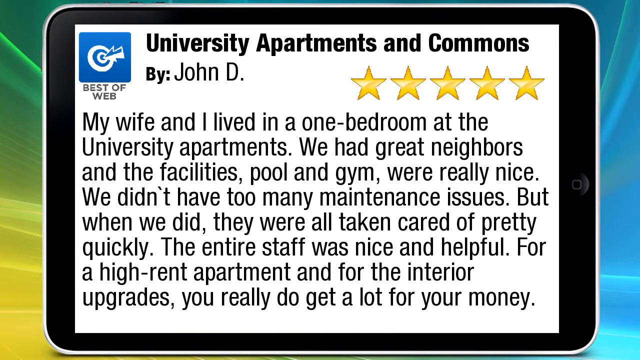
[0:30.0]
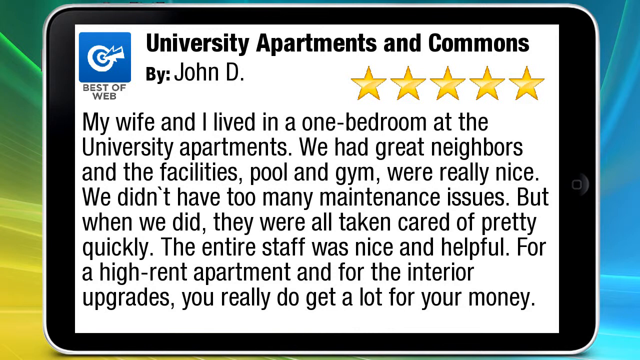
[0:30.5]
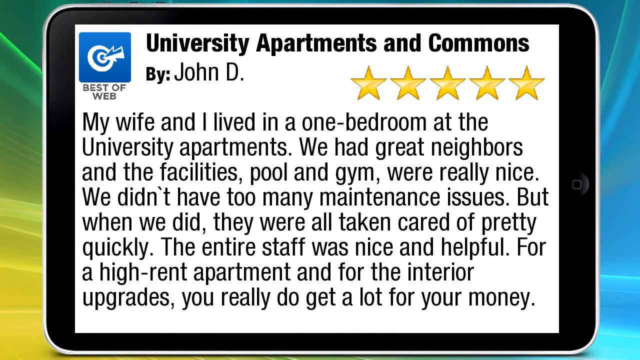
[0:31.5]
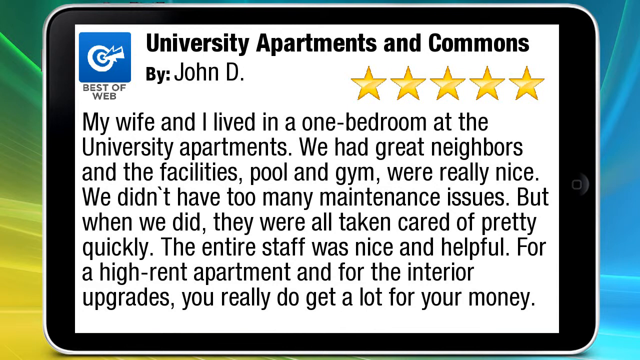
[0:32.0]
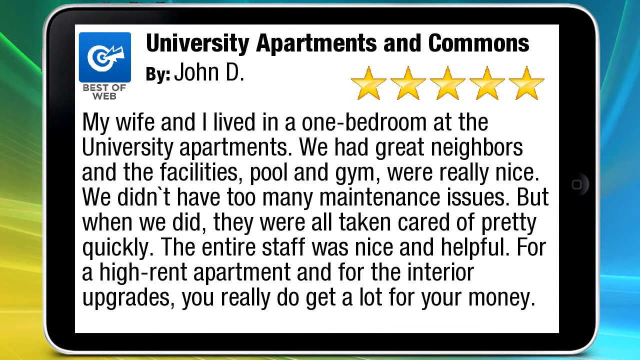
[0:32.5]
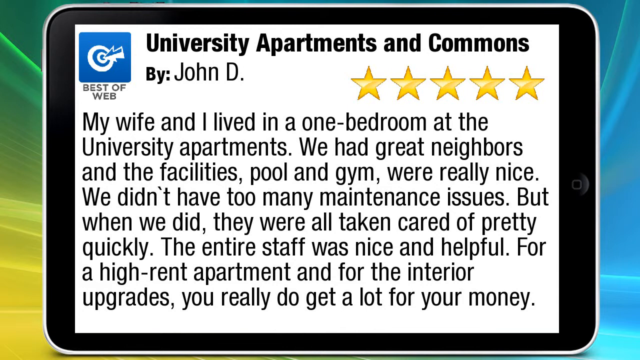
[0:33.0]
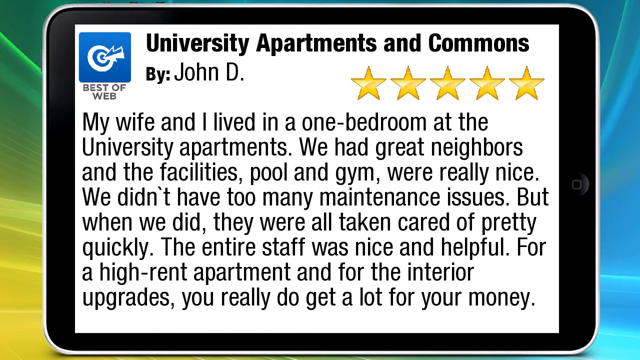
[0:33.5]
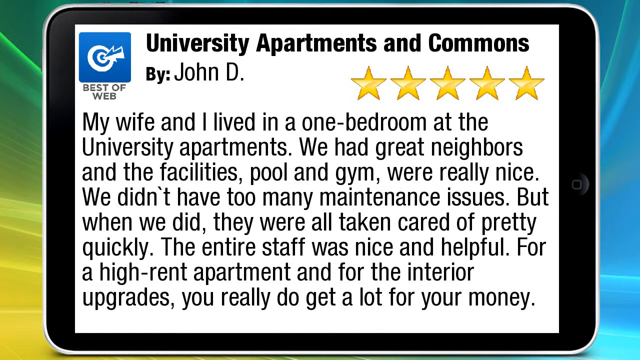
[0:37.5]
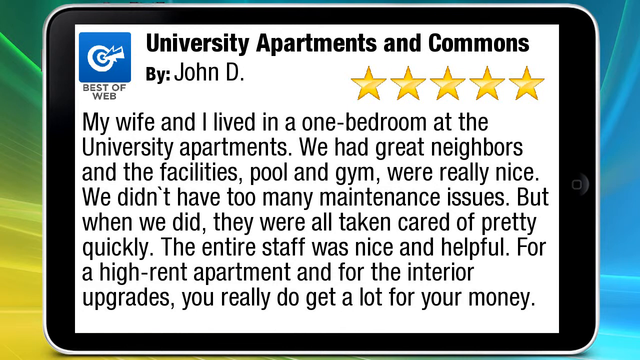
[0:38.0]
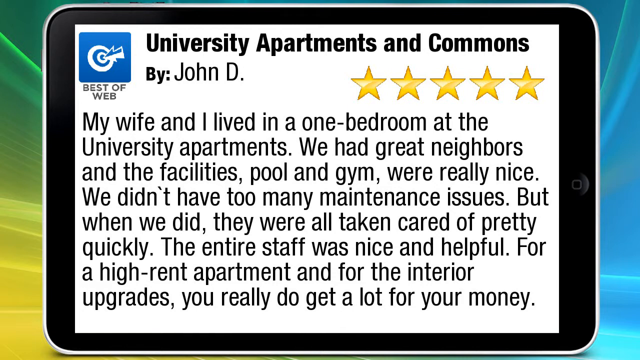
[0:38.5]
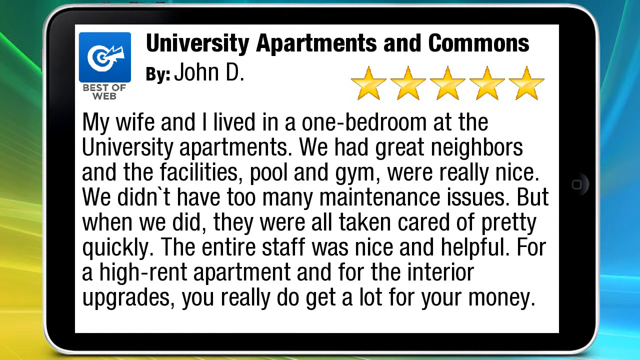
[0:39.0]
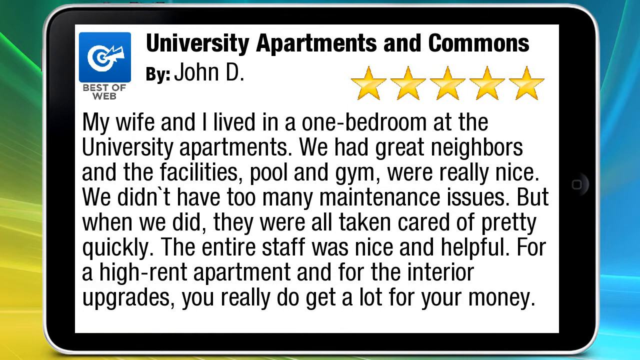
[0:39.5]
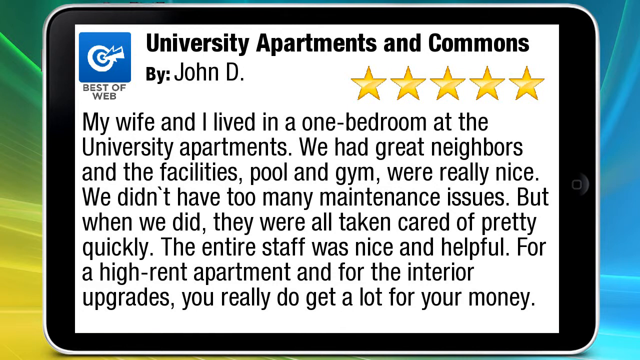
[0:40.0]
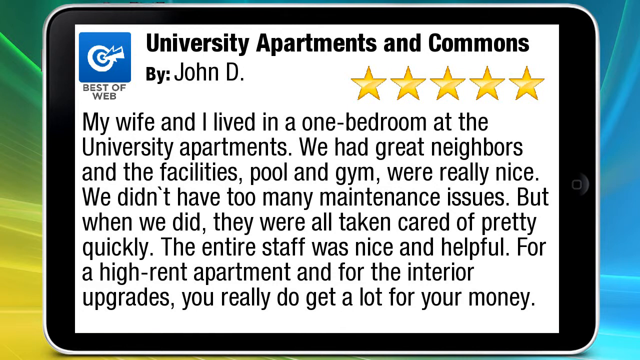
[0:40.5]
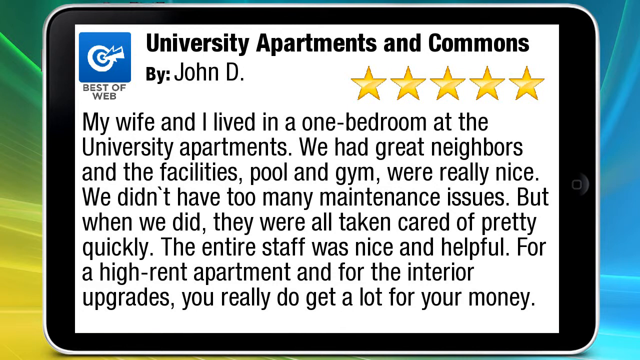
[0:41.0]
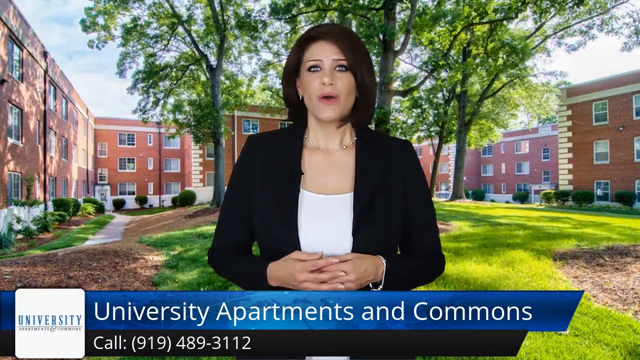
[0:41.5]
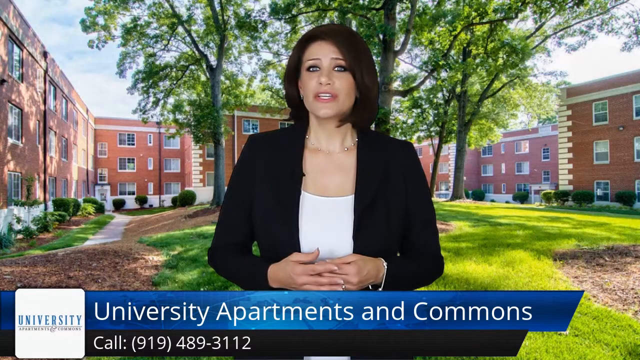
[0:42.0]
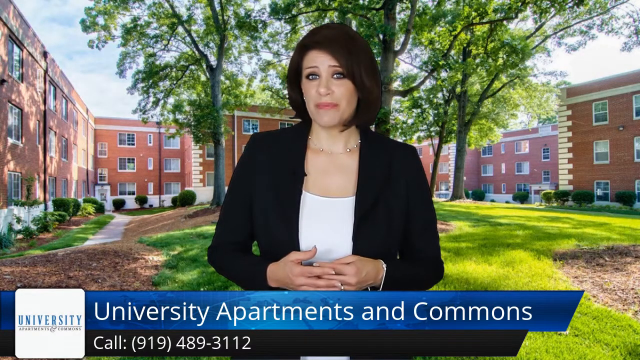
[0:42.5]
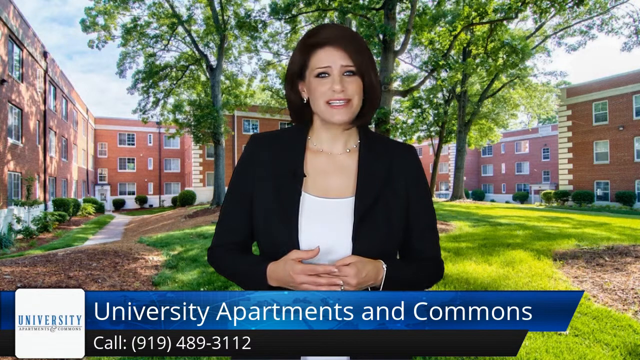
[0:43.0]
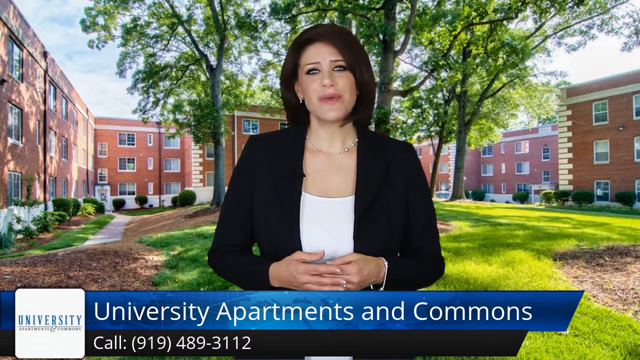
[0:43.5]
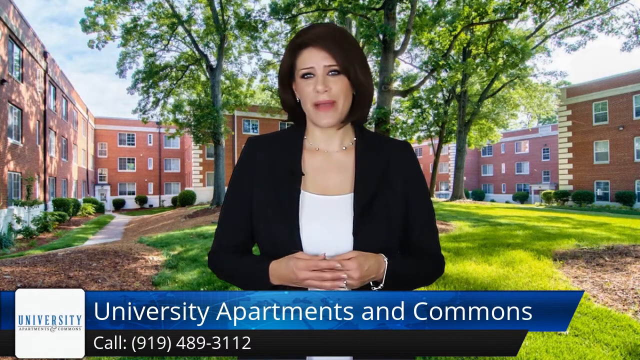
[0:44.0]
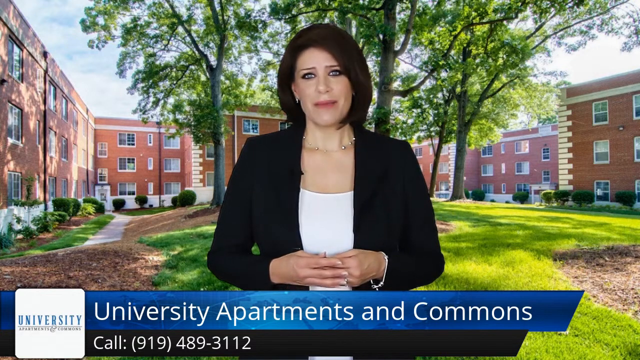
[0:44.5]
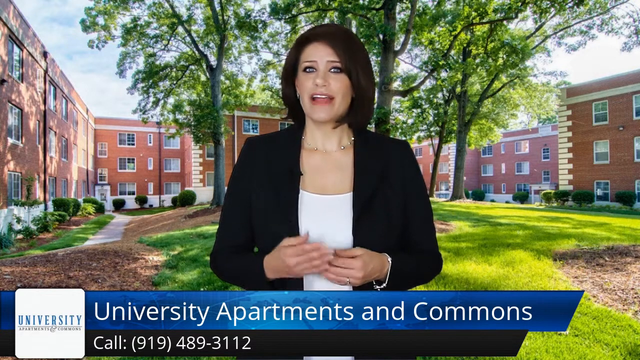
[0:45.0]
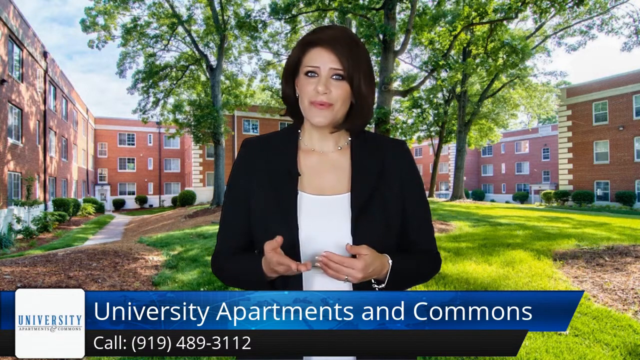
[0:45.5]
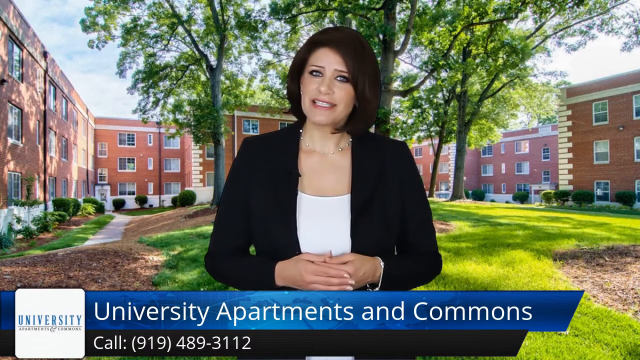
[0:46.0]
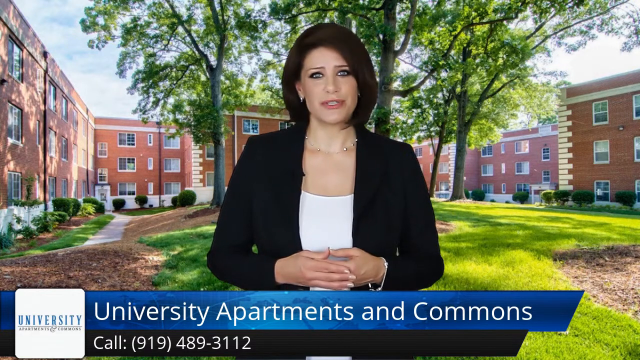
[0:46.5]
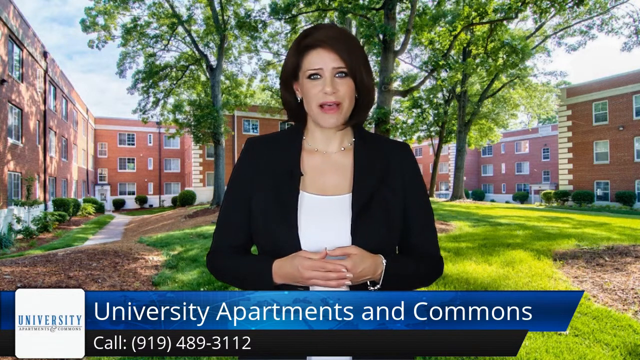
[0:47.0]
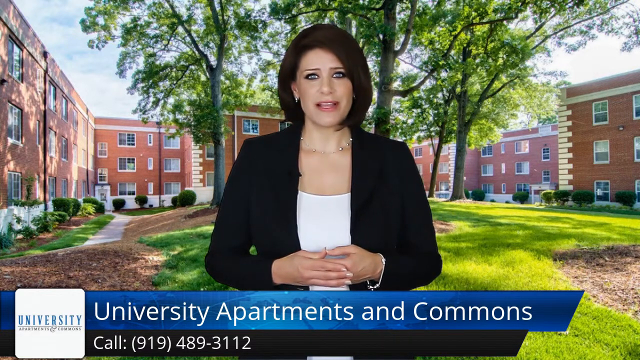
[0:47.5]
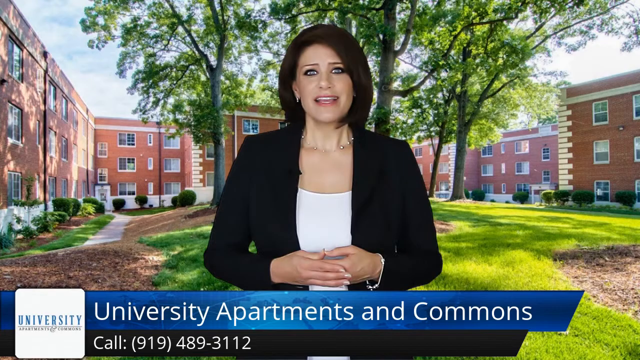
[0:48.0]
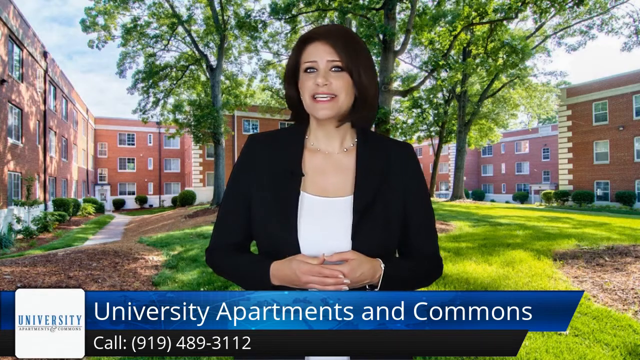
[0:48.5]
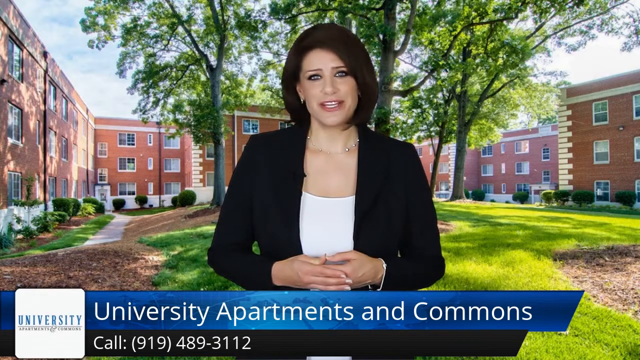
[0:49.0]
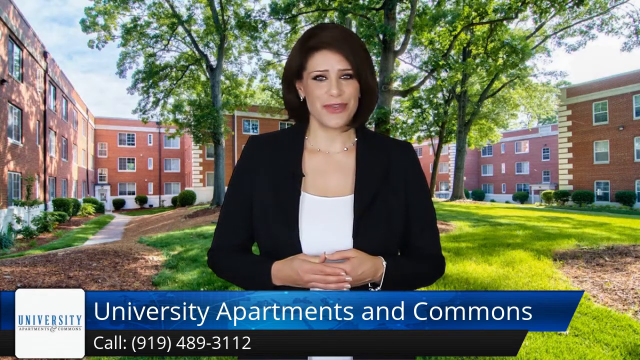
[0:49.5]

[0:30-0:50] Five golden stars and the University Apartments and Commons name appear on a white background. A middle-aged lady with short hair speaks directly into the camera, with a number to call at the bottom. A five-star review by John of the University Apartments and Commons follows, saying that he and his wife lived in a one-bedroom at the university apartments, that they had great neighbours and facilities, that the pool and gym were nice, that maintenance issues were fixed quickly, that the staff was helpful, and that it was well worth the money. After the review, the video returns to the lady speaking into the camera.